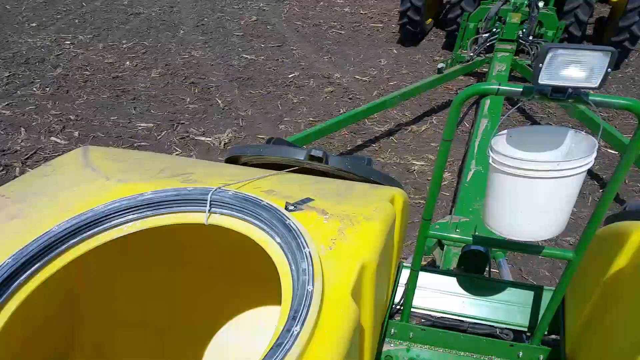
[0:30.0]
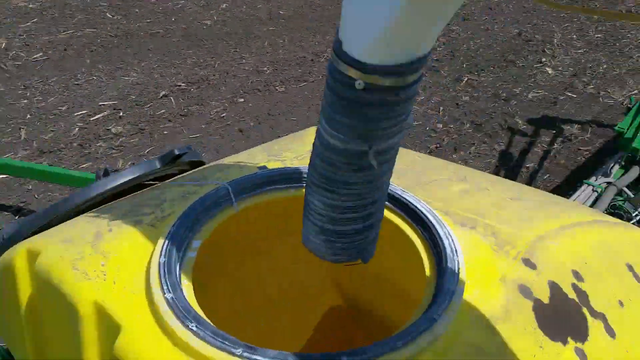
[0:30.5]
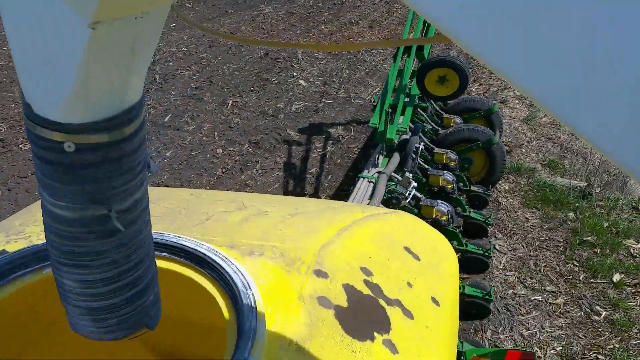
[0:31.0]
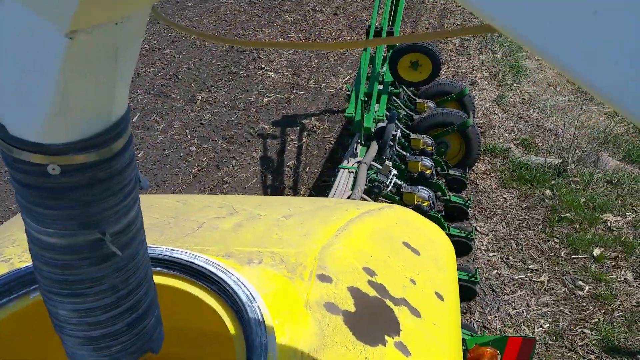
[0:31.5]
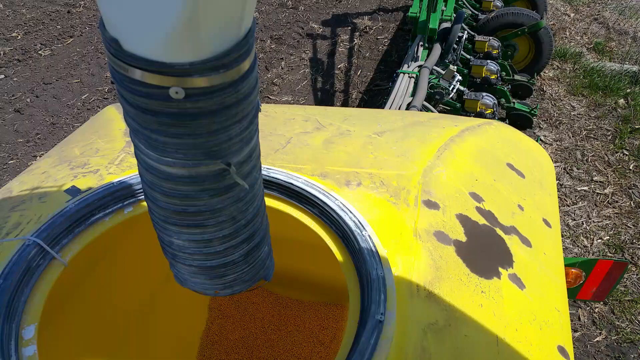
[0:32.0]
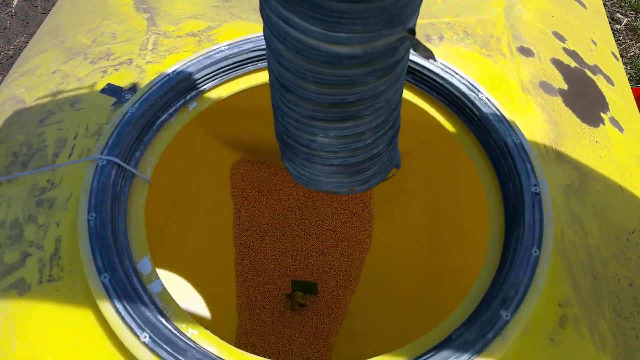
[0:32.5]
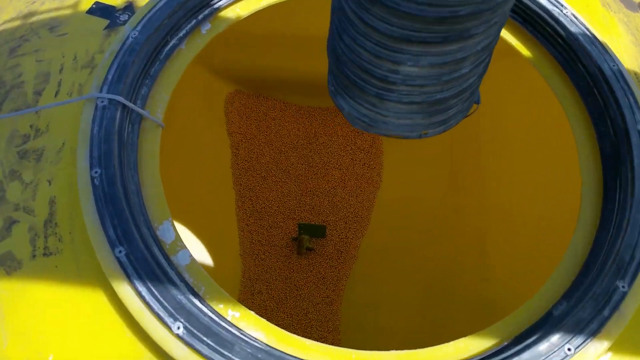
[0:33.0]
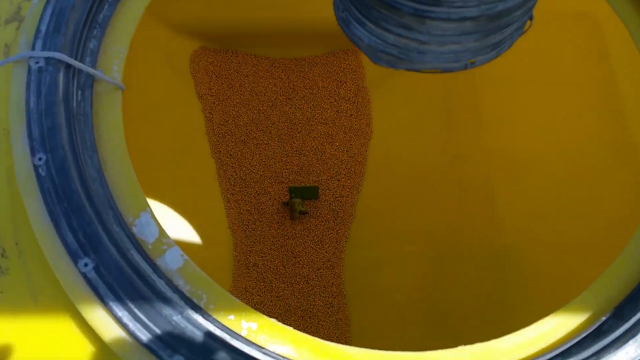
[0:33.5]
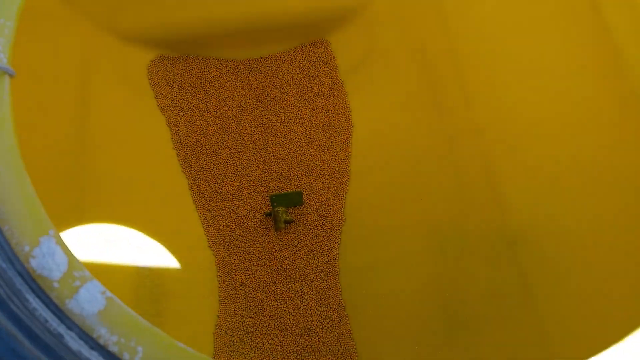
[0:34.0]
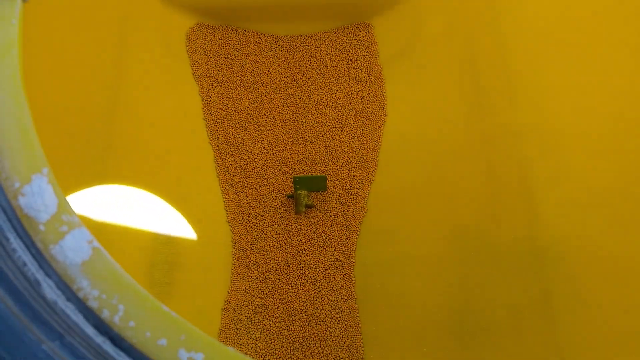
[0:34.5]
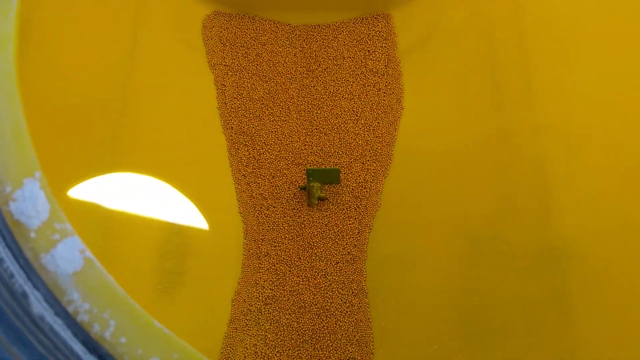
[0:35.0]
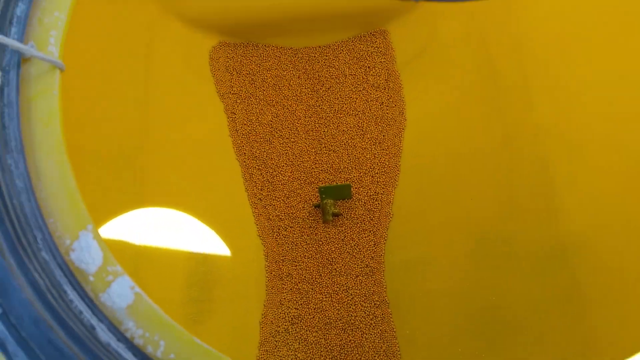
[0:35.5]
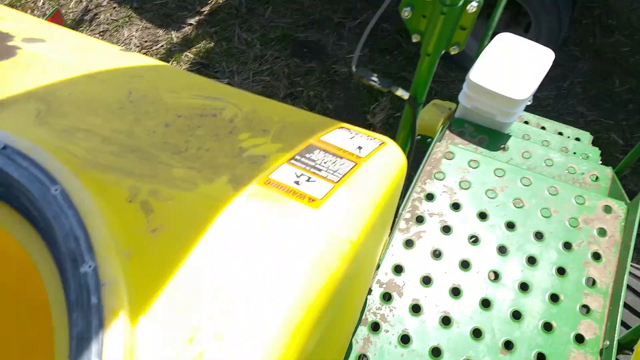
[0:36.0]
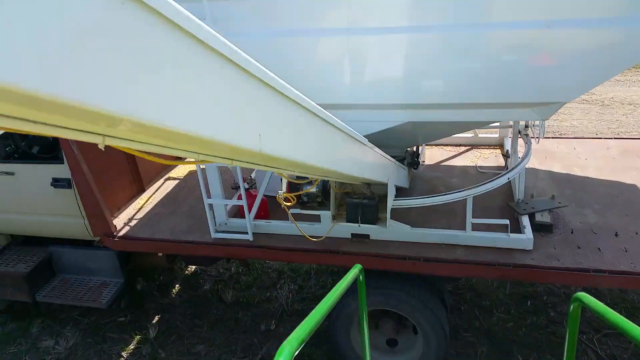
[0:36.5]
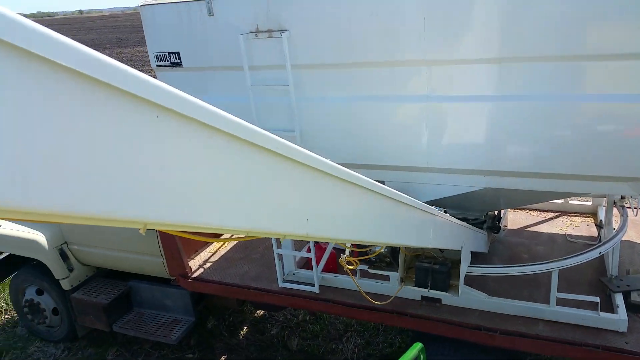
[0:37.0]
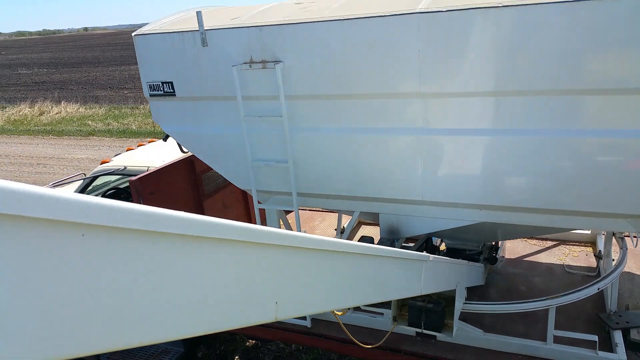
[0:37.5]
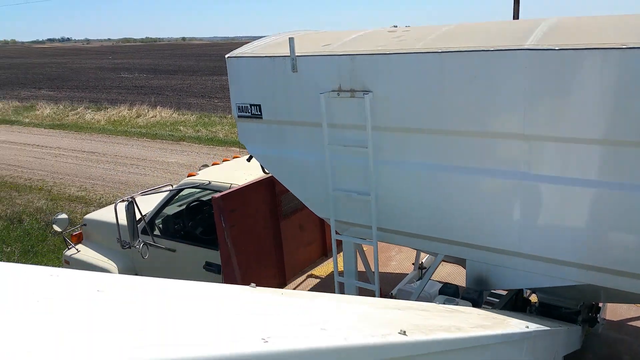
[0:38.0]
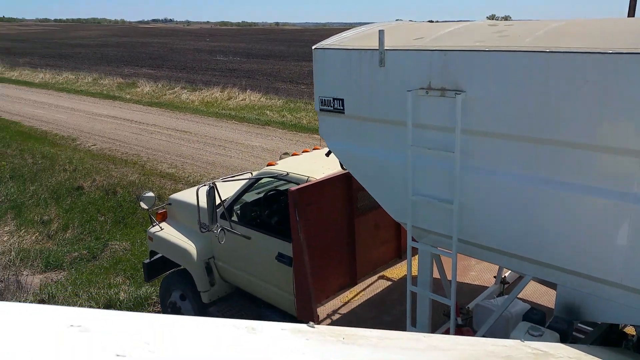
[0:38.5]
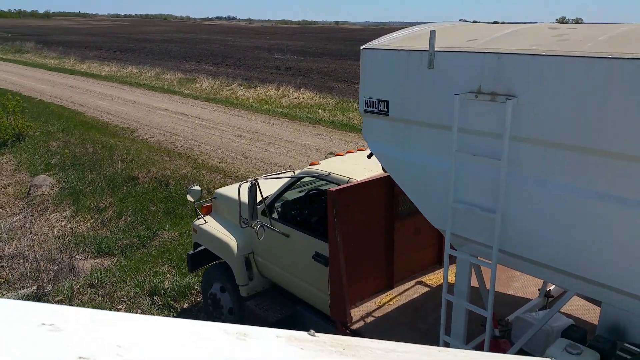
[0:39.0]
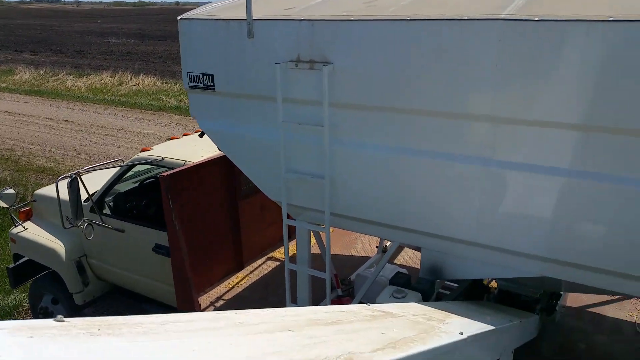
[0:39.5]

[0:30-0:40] The camera looks at the two big yellow bins on top of the agricultural machine, then points at one of the bin openings. At the very bottom inside the bin are what look to be yellow or orange seeds, too many to count. The camera goes back to the scenery, showing that the feeder is connected to a long white chute that goes to a white truck near the road. The truck has a large bin or container in the back that looks like it is hovering.